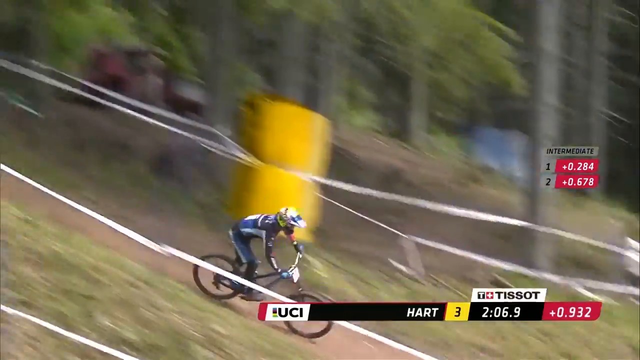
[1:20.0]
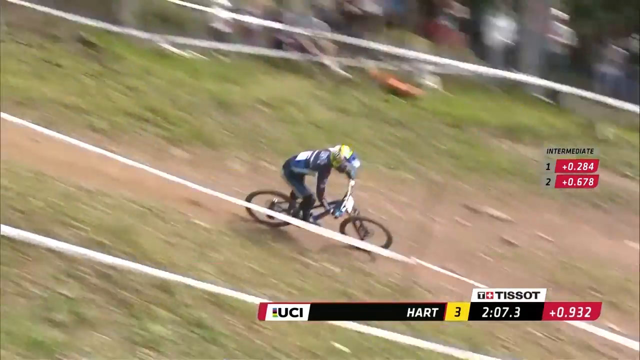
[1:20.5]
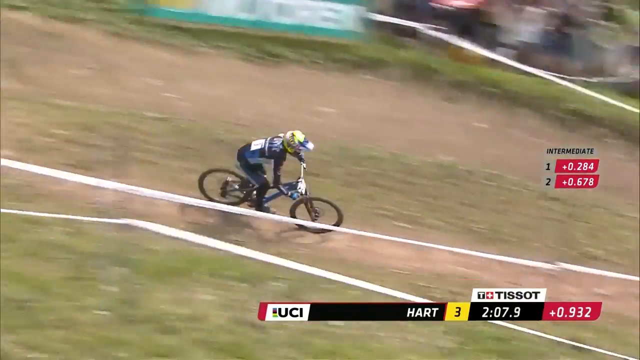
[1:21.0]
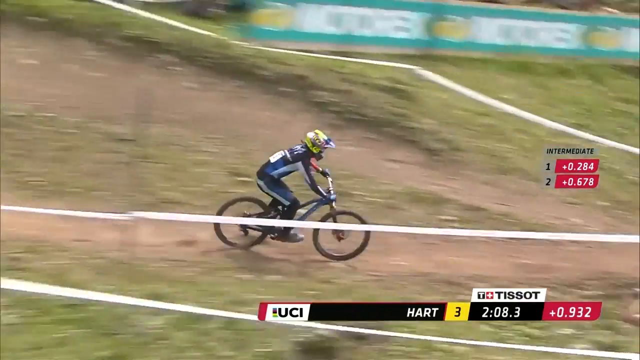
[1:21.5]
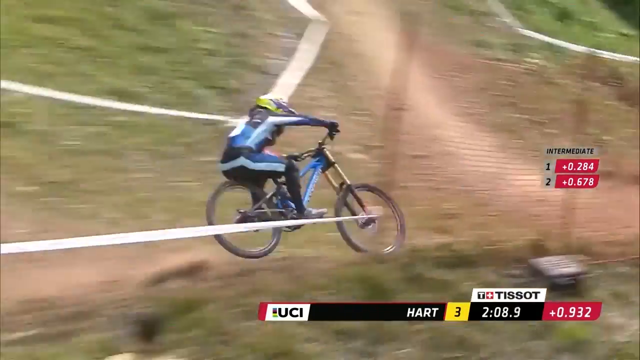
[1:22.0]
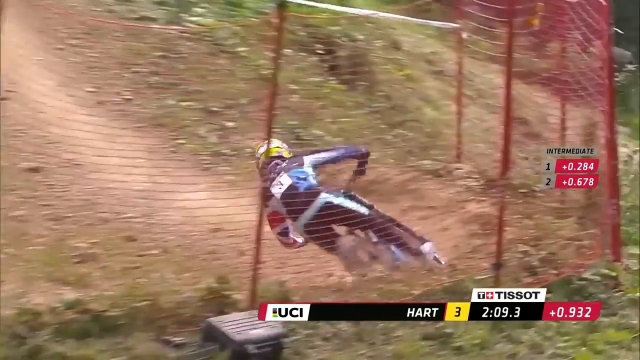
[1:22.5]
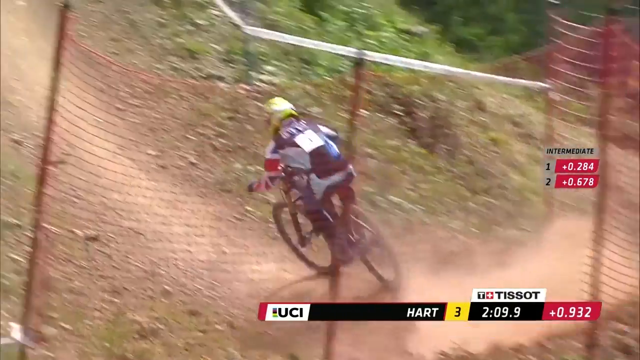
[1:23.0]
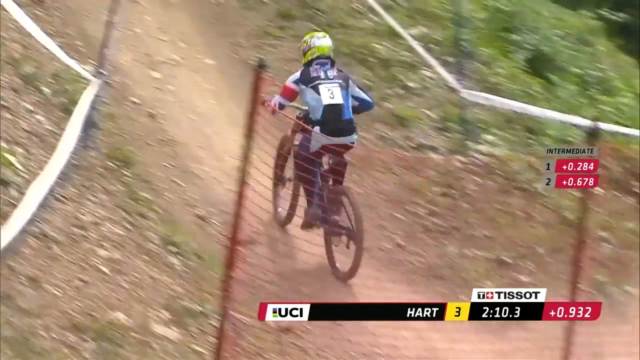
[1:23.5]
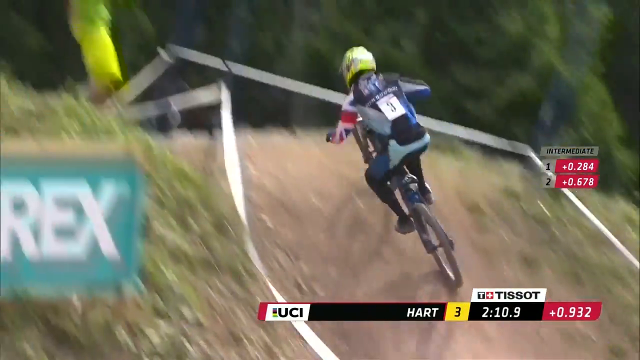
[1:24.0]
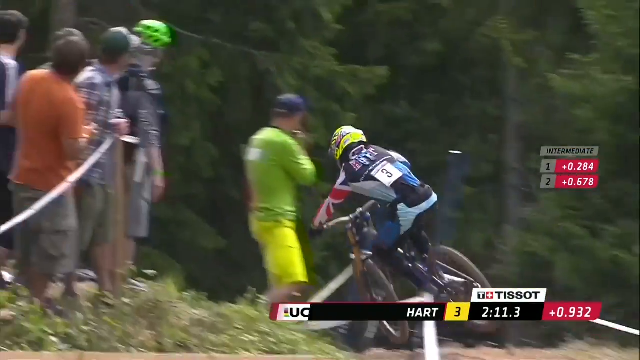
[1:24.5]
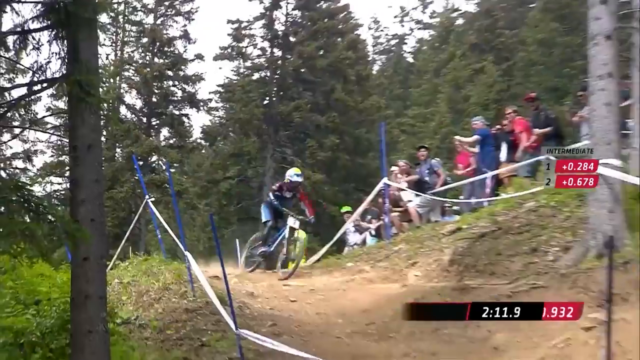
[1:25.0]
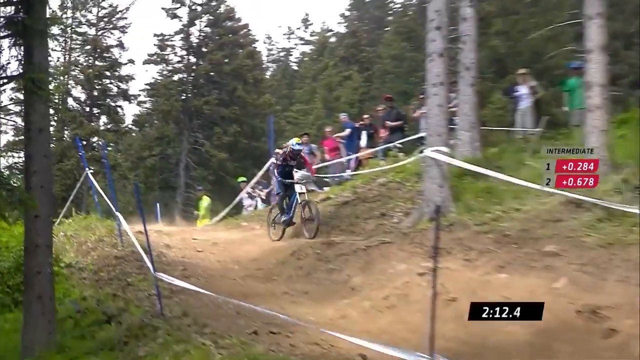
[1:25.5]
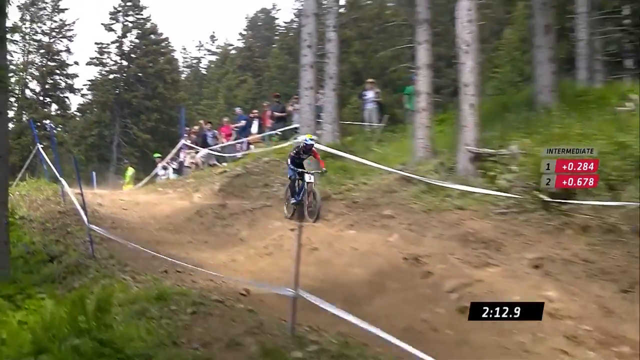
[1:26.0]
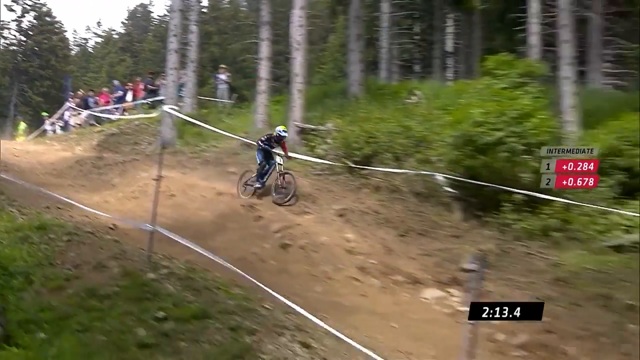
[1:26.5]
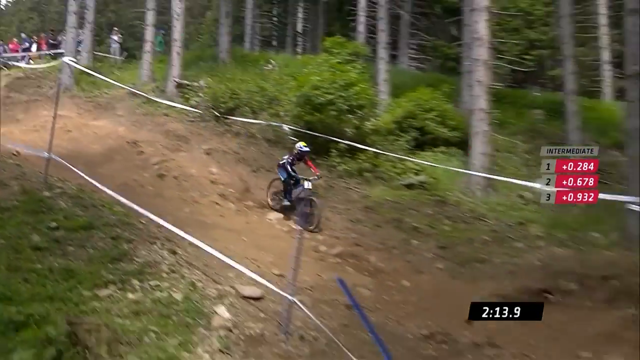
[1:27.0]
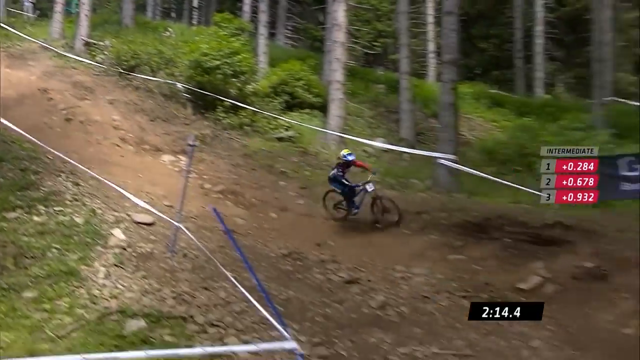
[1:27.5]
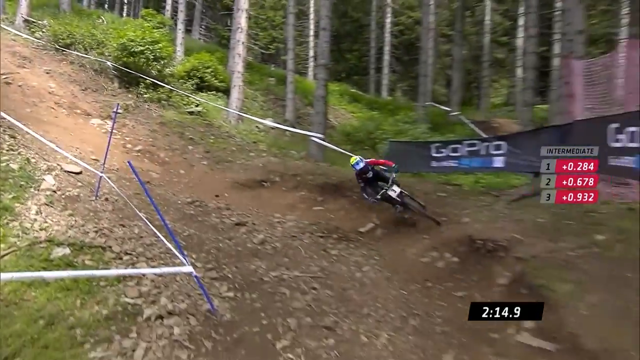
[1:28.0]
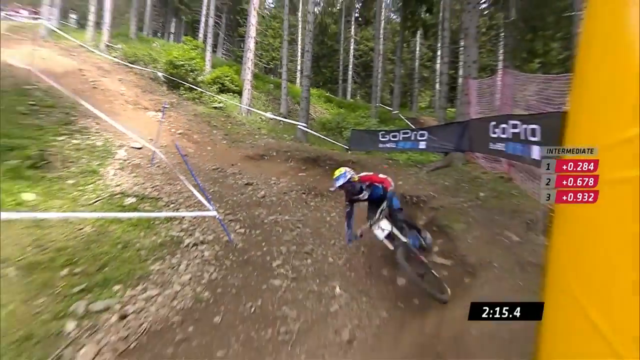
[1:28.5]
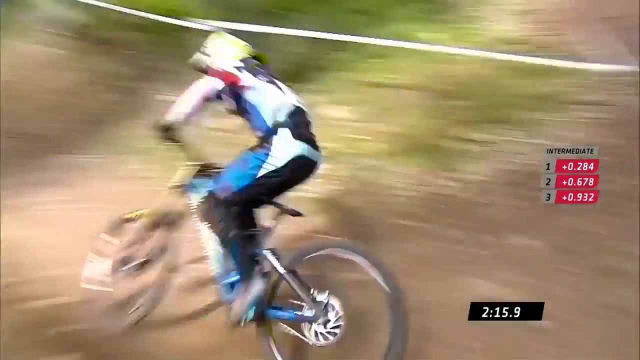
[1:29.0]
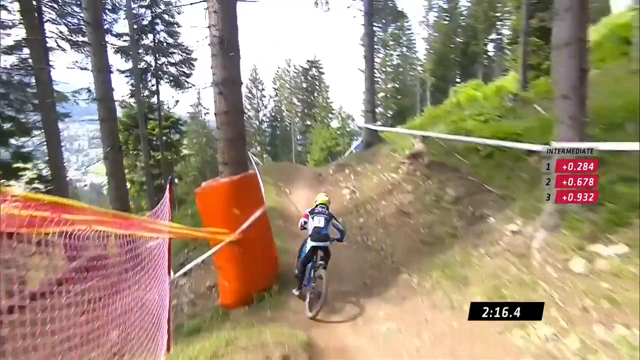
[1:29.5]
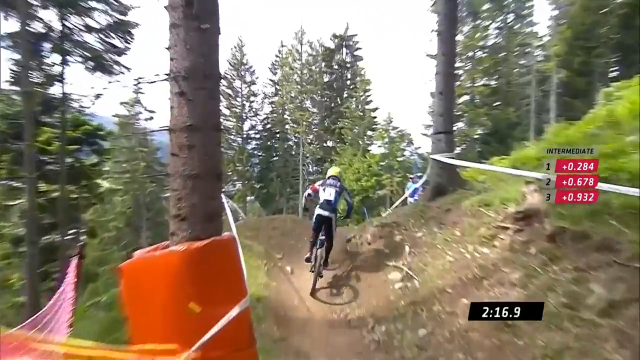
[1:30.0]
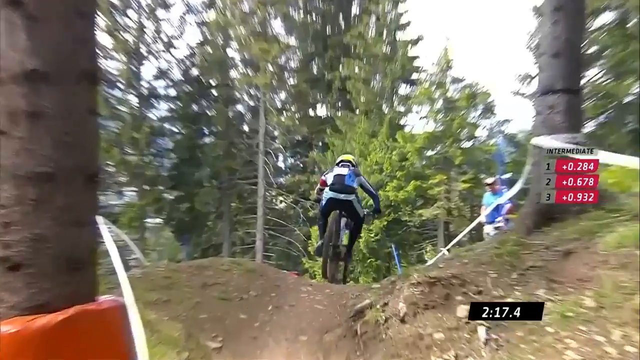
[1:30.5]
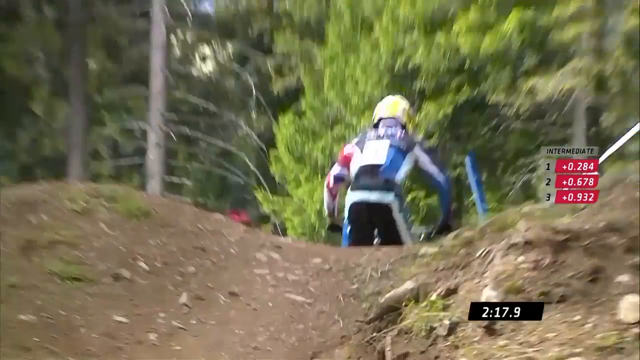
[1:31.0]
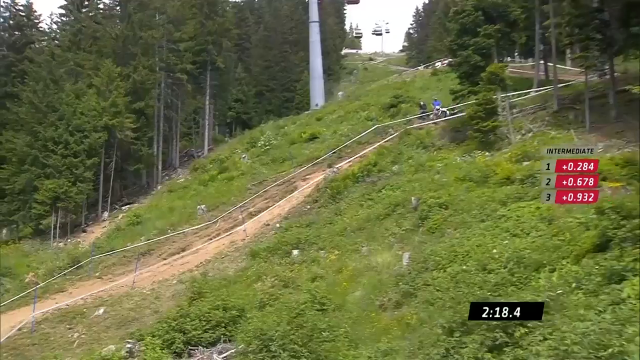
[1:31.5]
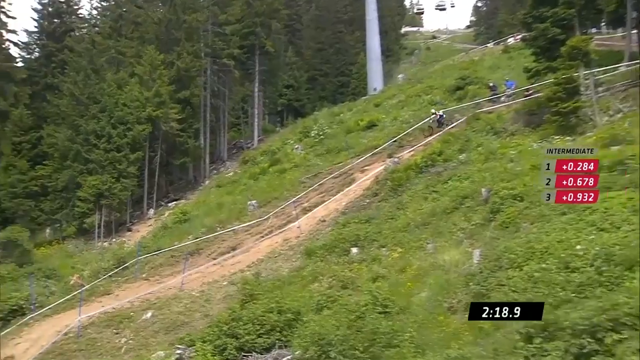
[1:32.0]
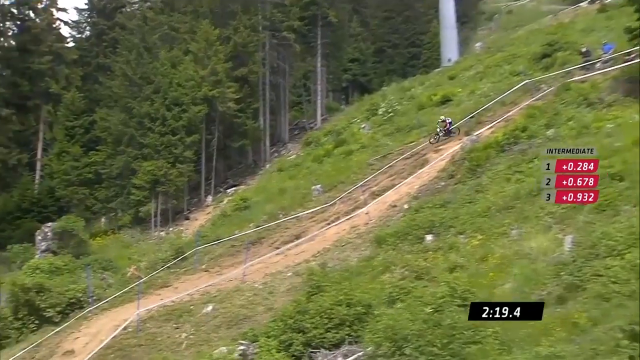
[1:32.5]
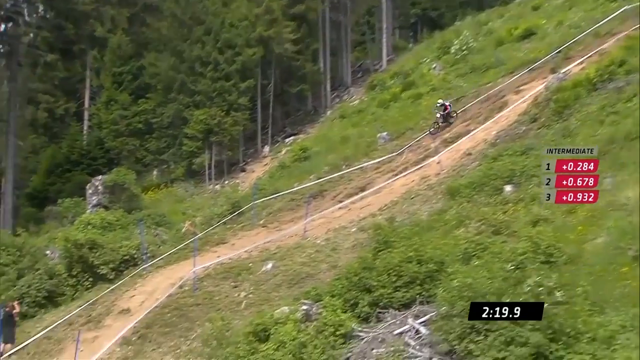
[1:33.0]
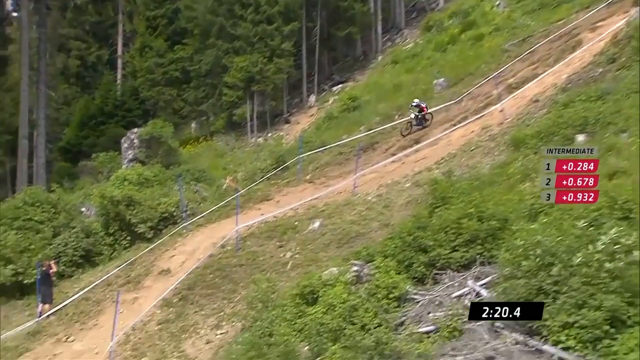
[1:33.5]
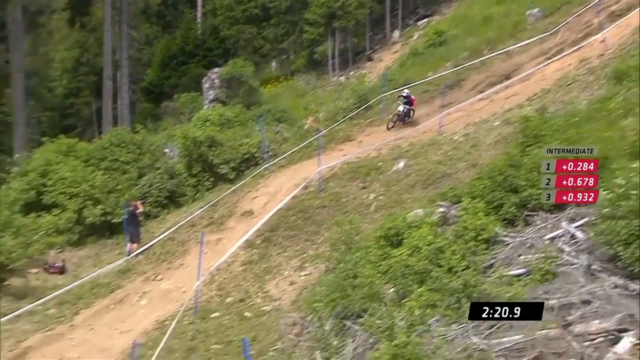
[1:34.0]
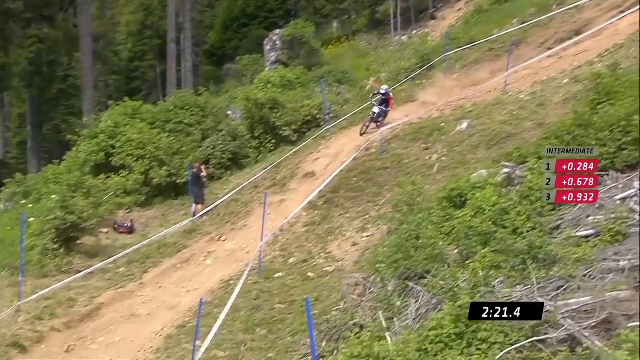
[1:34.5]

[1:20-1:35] The biker continues along the rocky dirt path, outlined with white tape on either side. He passes a large group of people standing behind an advertisement banner. There are fewer trees in the pathway here. He goes over an embankment and around a sharp turn, is airborne for a moment, comes down around another embankment and sharp turn, and then descends a very steep hill, gaining speed and momentum. The Red Bull logo is in the corner, and his elapsed time shows somewhere around two minutes so far.